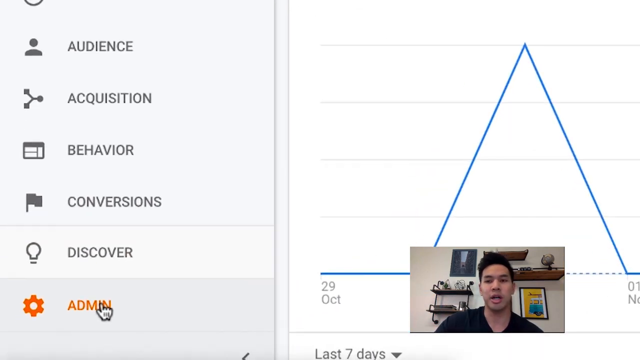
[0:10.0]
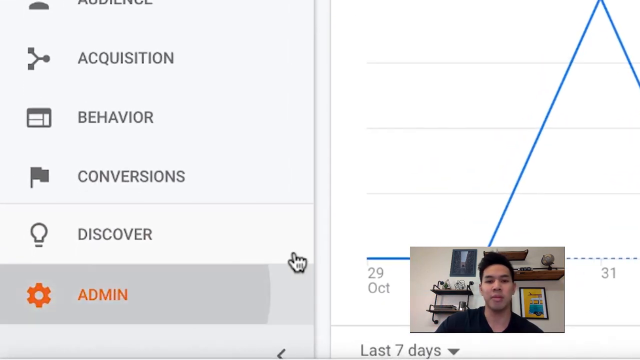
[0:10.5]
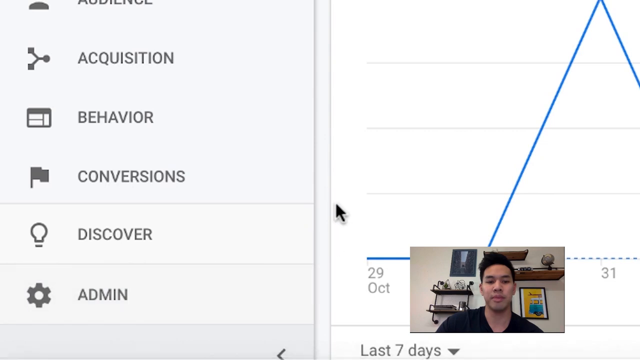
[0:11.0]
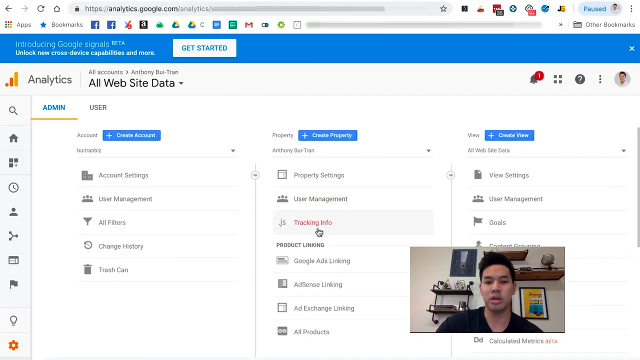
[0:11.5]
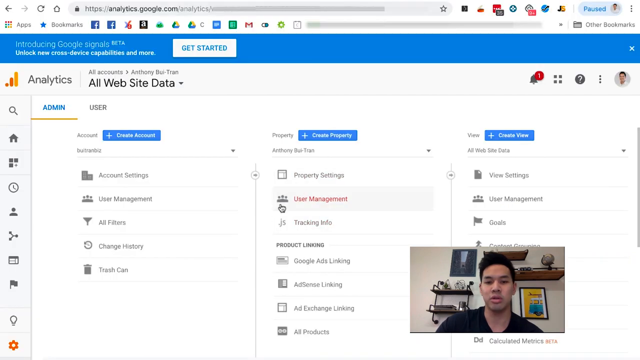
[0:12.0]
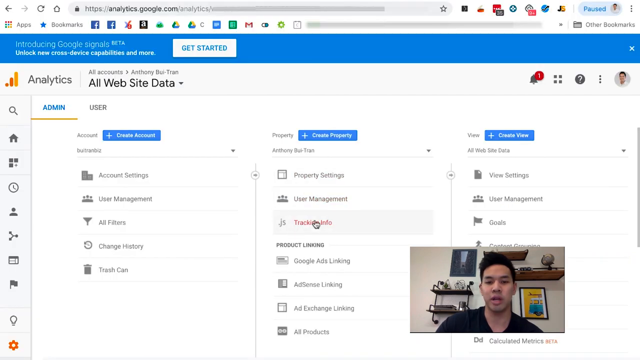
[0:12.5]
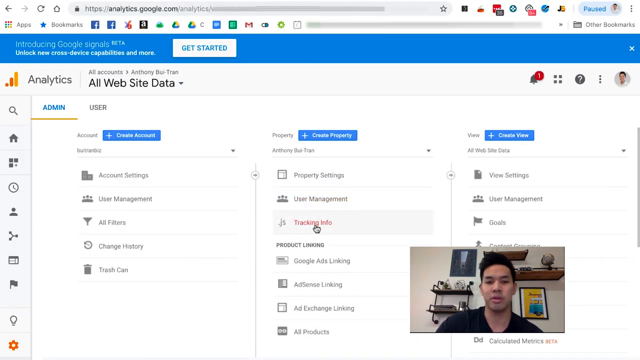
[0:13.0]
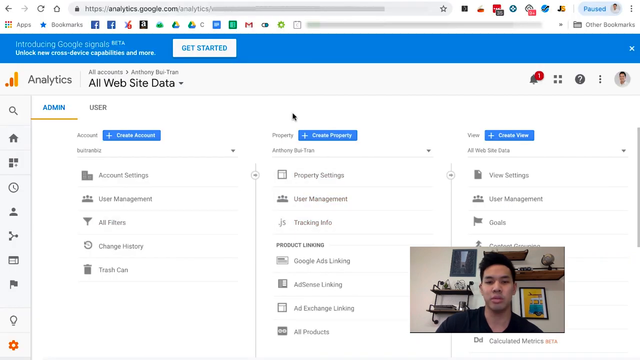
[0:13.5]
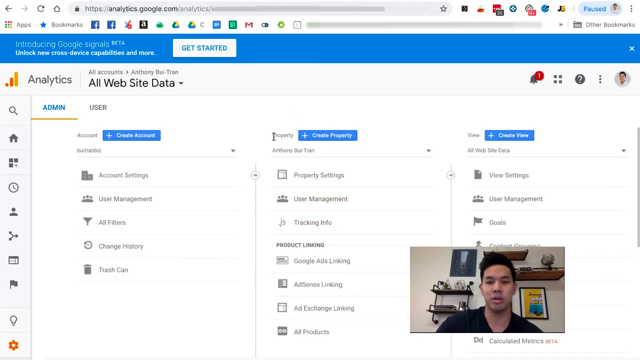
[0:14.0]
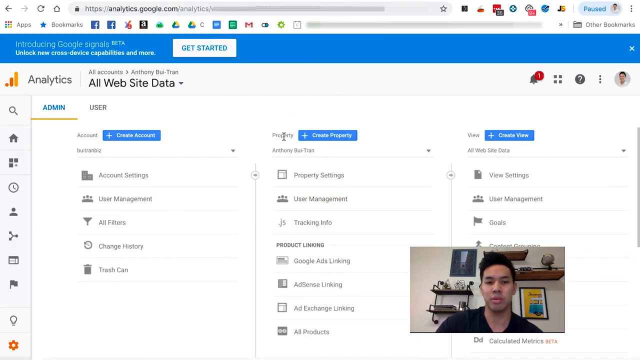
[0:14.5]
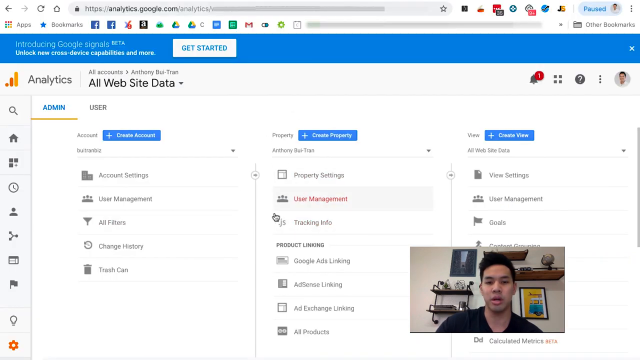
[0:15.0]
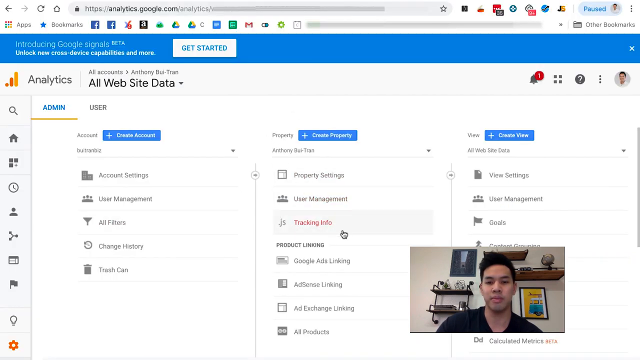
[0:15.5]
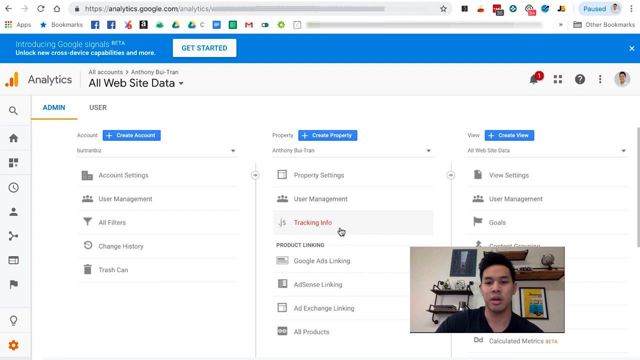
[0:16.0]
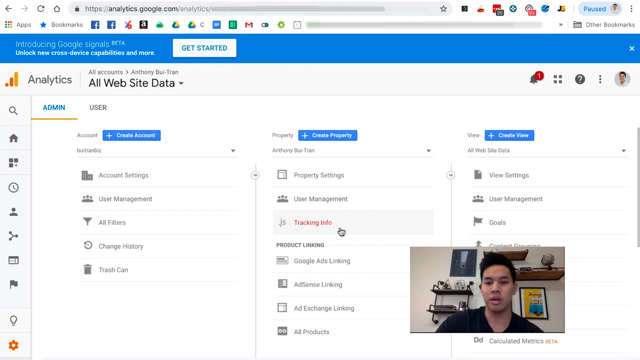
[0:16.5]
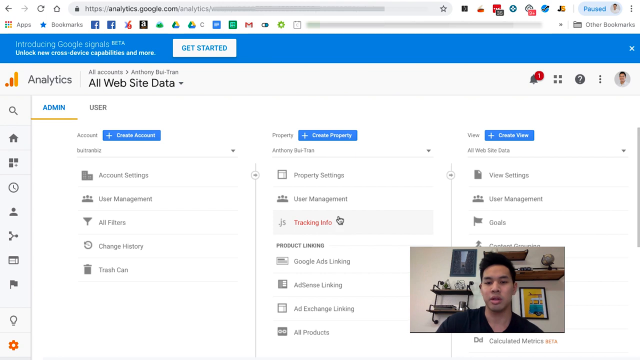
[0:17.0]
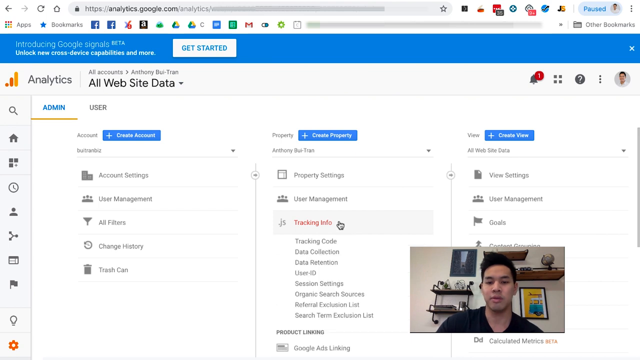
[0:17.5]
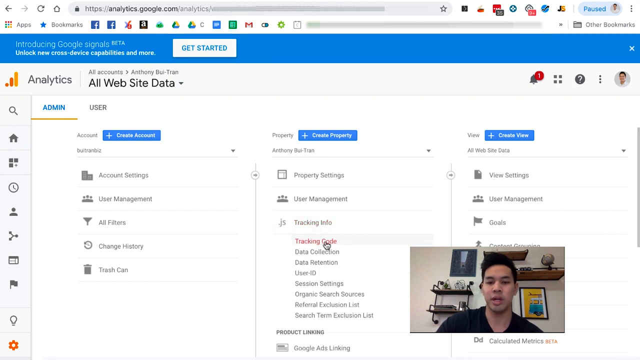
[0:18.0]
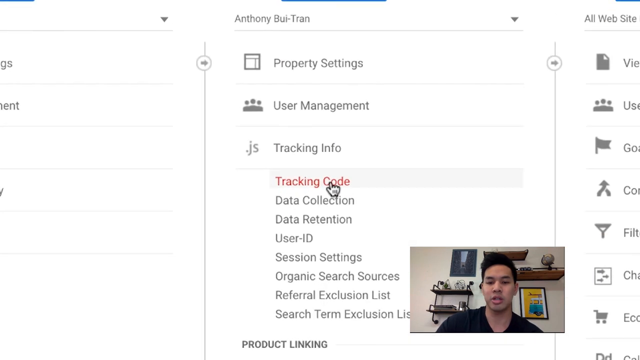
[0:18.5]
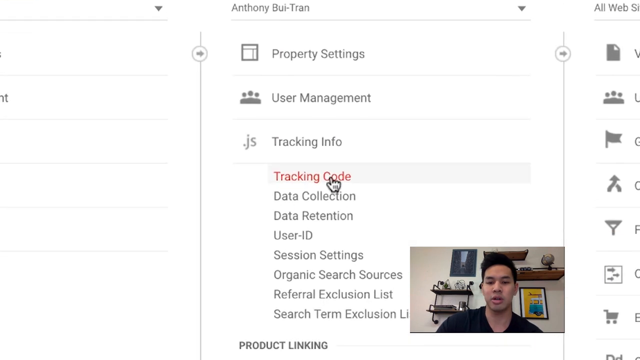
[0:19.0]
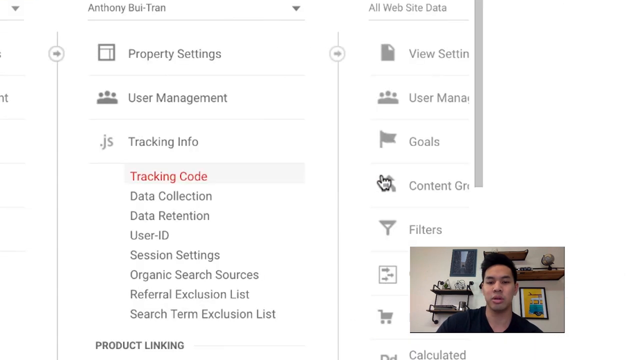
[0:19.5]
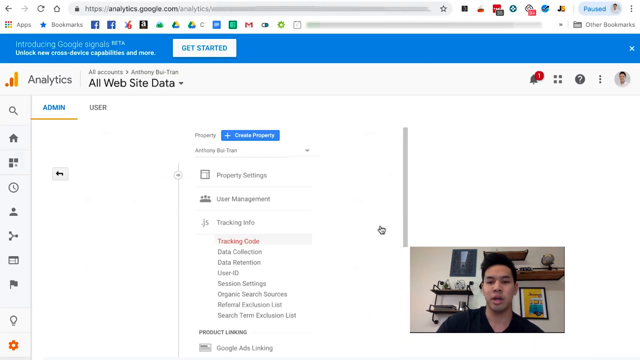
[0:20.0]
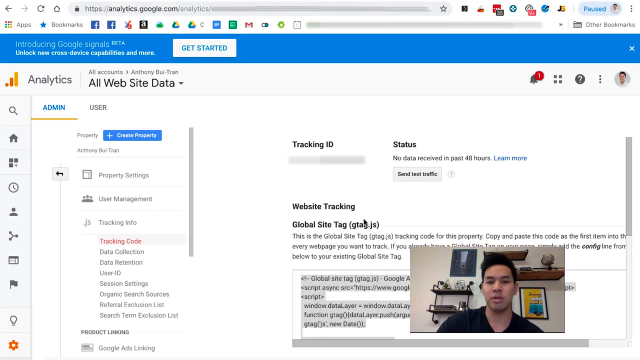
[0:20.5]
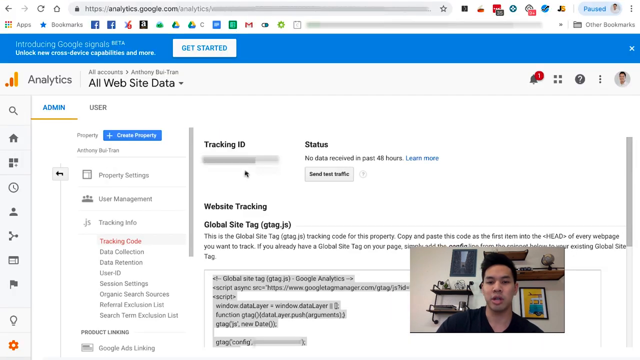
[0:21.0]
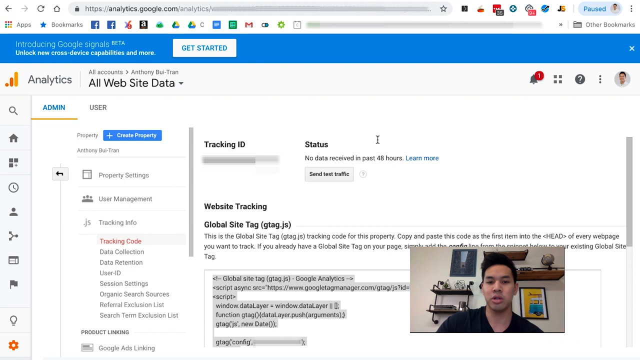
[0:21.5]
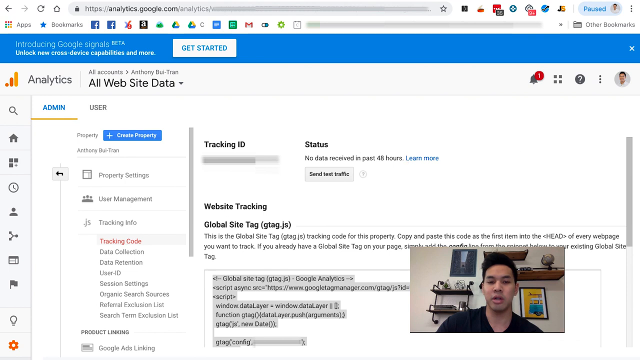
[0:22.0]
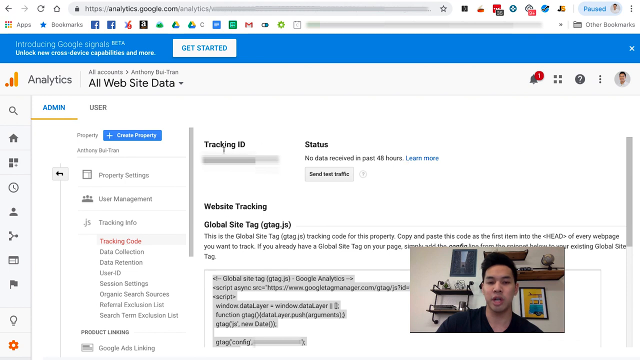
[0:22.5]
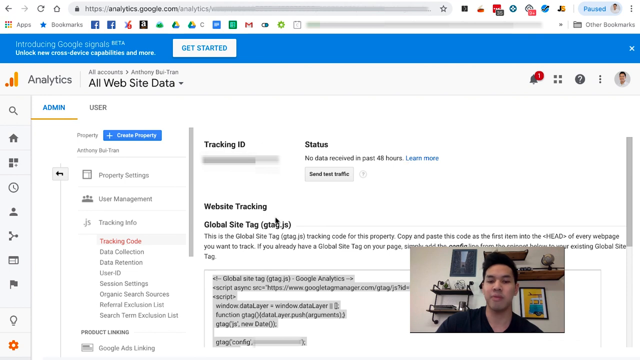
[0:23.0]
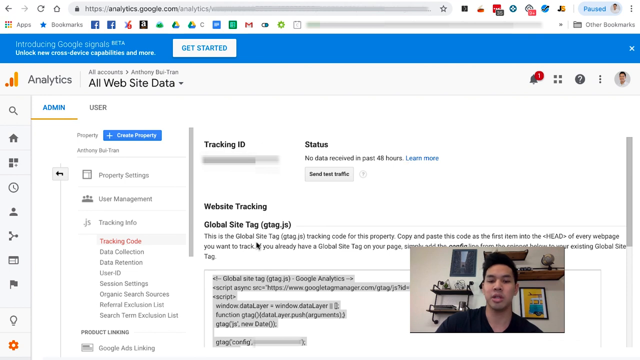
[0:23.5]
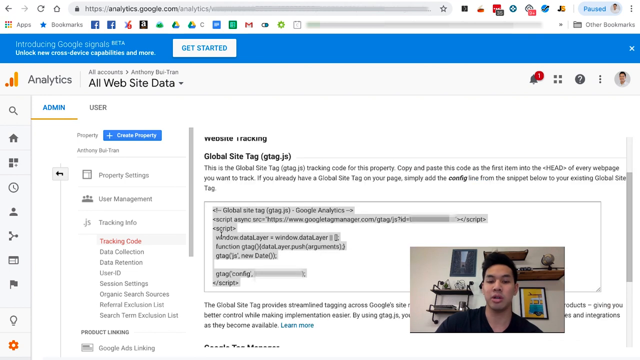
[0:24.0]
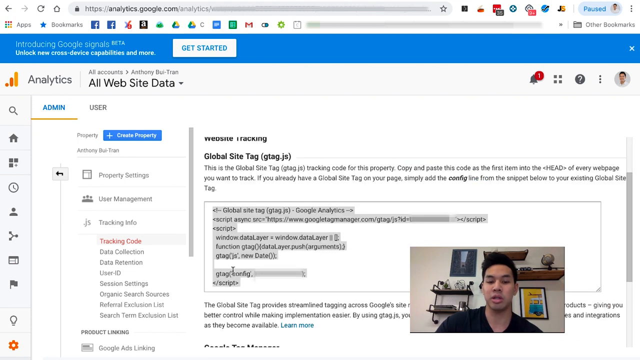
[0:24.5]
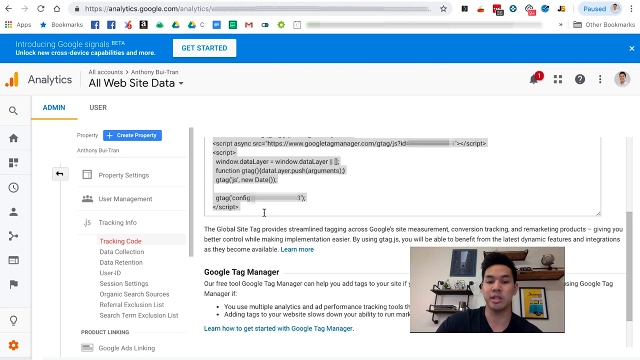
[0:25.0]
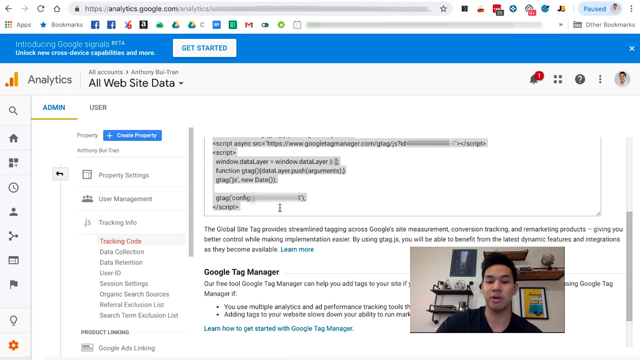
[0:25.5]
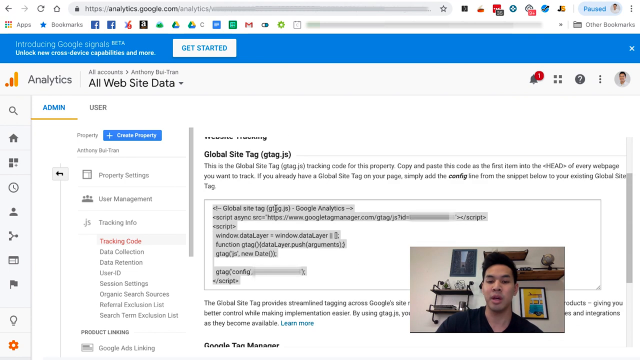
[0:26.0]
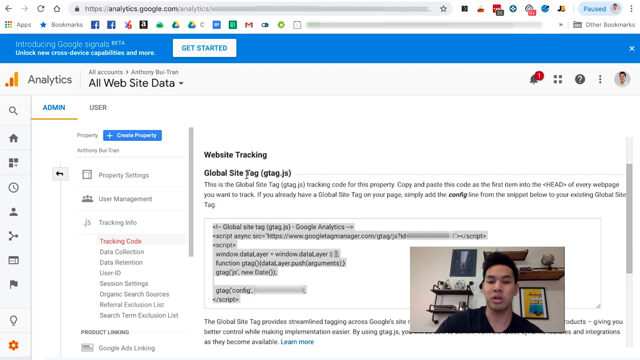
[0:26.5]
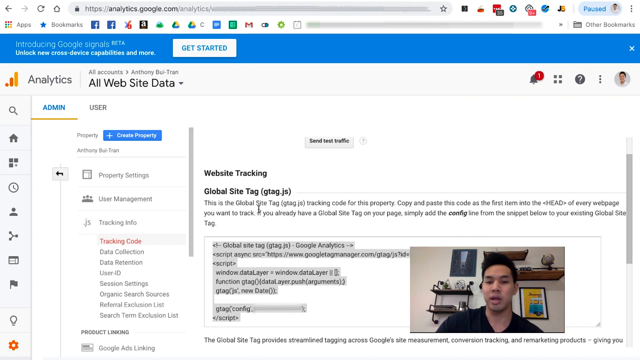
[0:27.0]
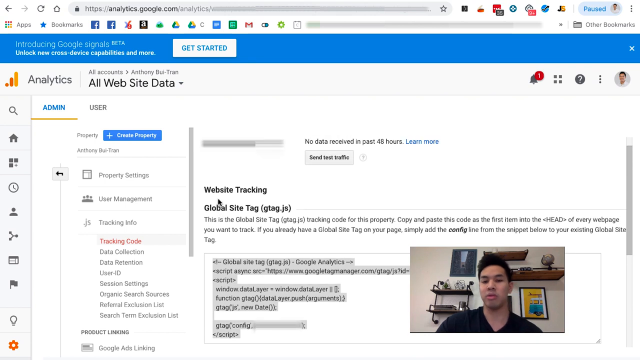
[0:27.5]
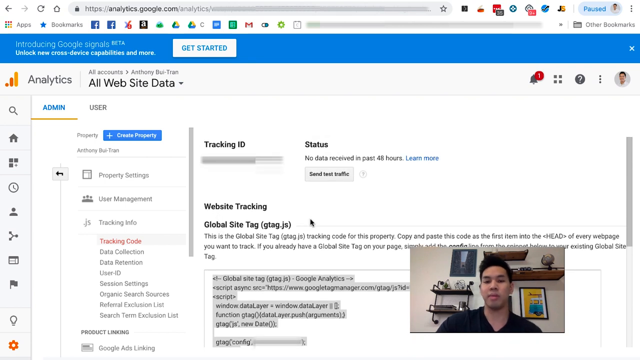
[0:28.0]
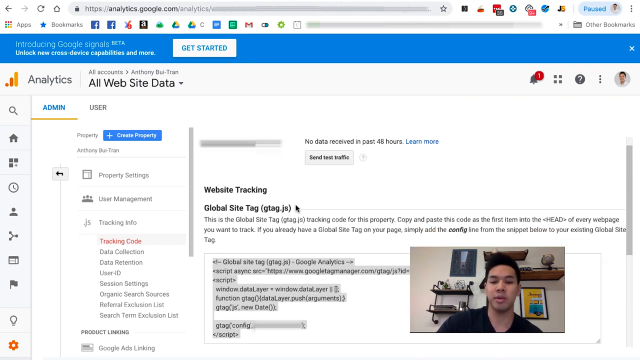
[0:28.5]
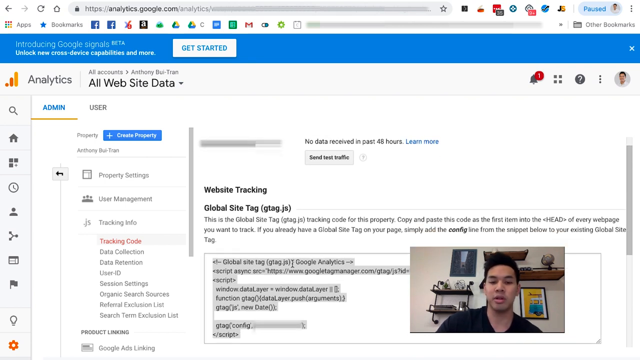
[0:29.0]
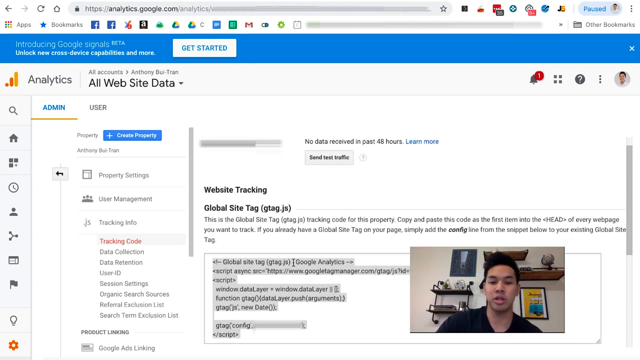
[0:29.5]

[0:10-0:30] A web page shows part of a Google Analytics page, with navigation items on the left and part of a line chart on the right. At the bottom of the screen, a small video window shows a man with dark hair in a dark top, with various shelves behind him, talking to the screen. The mouse moves around the screen and an expanded view shows the whole browser window: a Google Analytics page with user management currently selected. The mouse hovers over tracking info, which turns red, then clicks on tracking code, revealing information such as the tracking ID and the status. The tracking ID has been blurred out. The mouse moves down to show the tracking code. In a website tracking section at the bottom, a snippet of JavaScript has been highlighted, presumably to copy. The mouse hovers over that snippet and copies it.